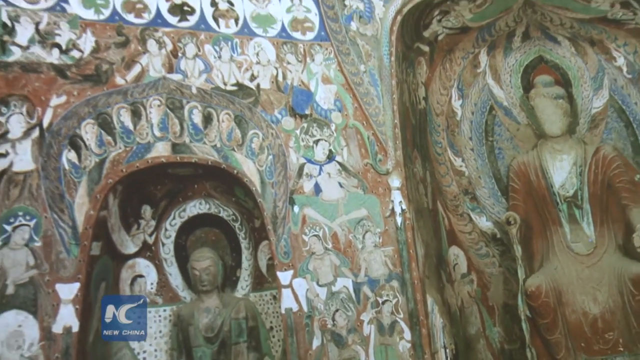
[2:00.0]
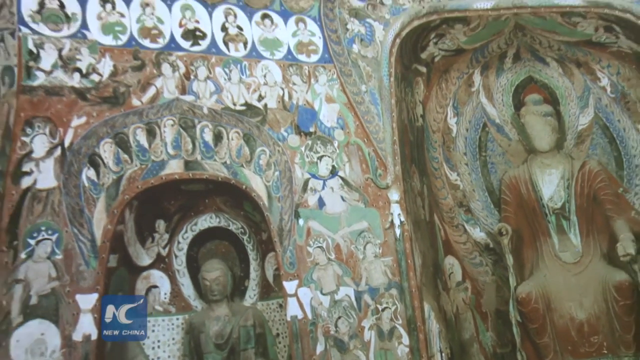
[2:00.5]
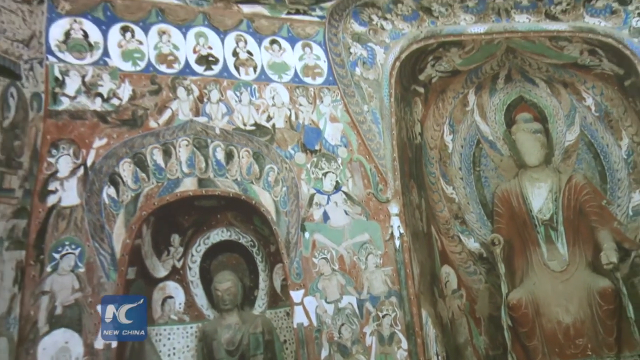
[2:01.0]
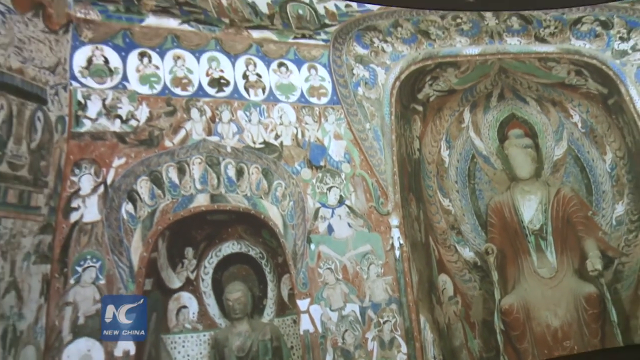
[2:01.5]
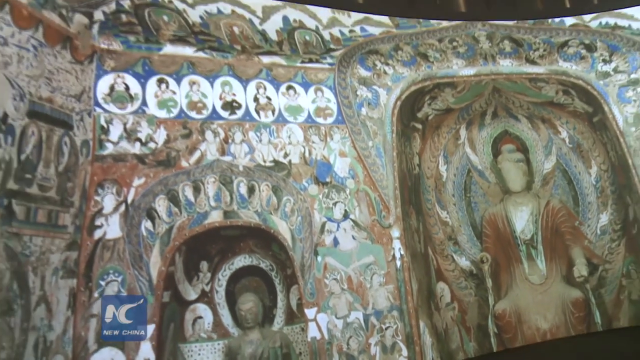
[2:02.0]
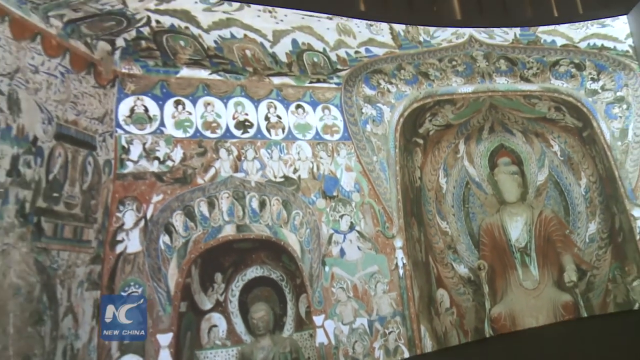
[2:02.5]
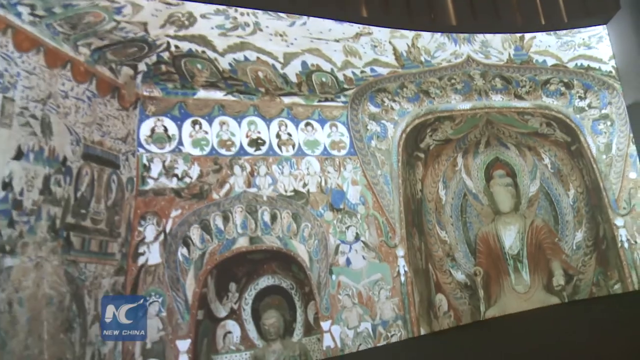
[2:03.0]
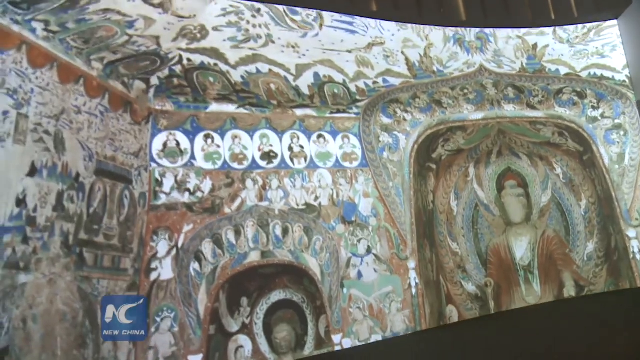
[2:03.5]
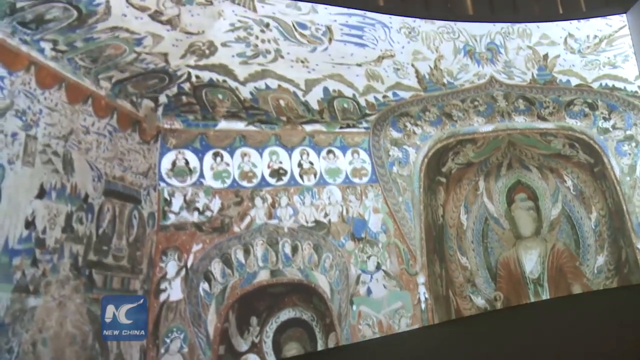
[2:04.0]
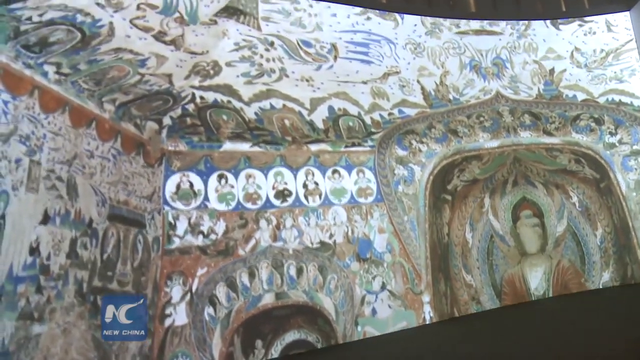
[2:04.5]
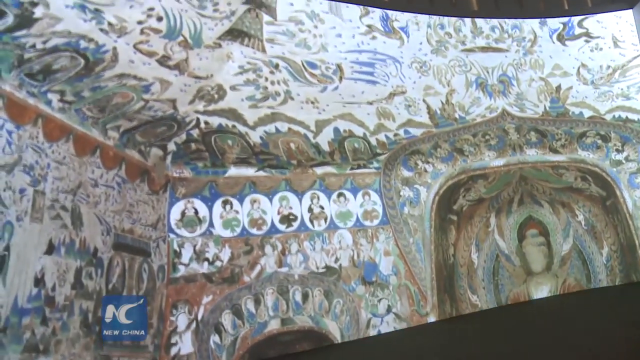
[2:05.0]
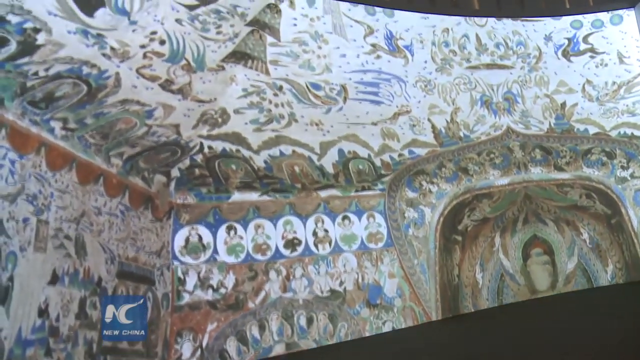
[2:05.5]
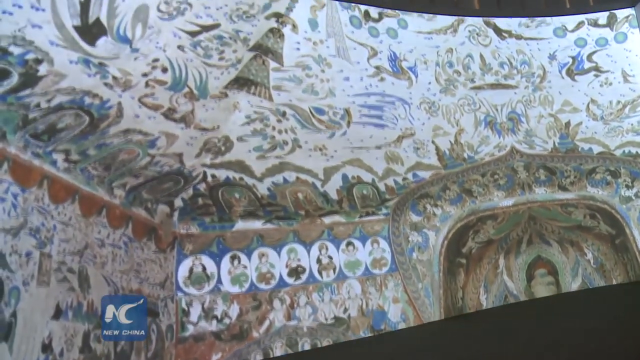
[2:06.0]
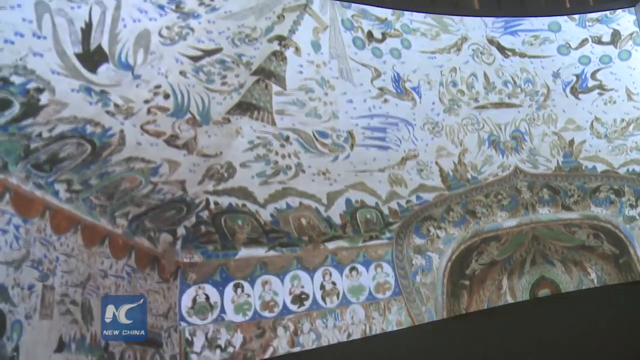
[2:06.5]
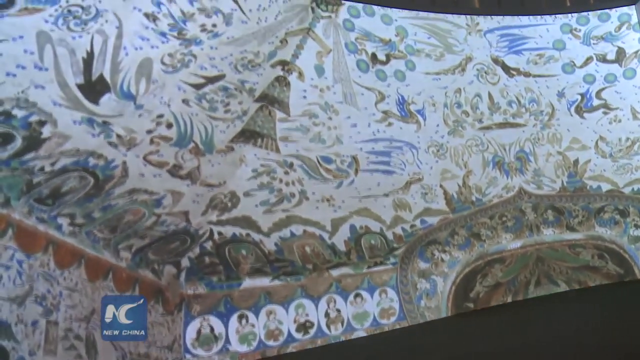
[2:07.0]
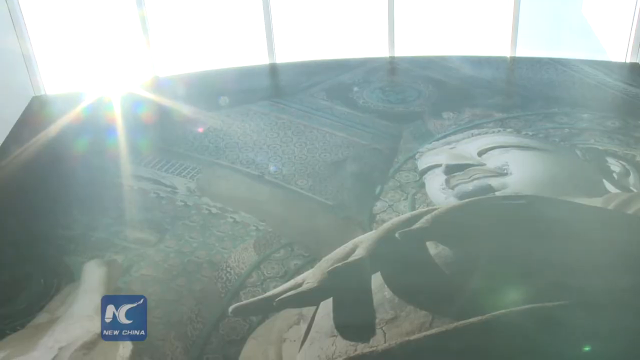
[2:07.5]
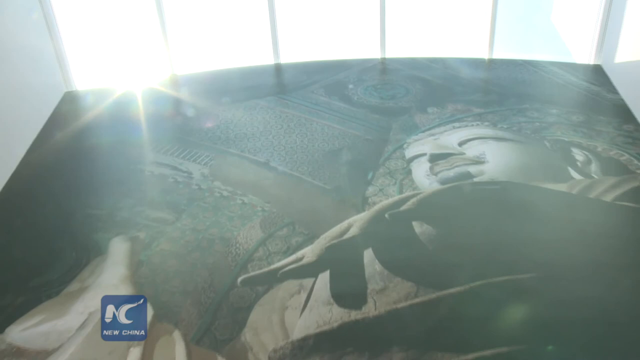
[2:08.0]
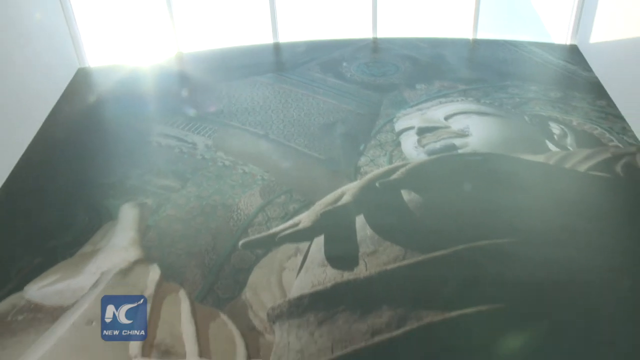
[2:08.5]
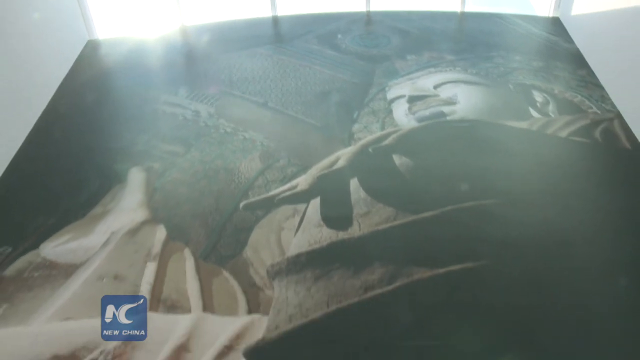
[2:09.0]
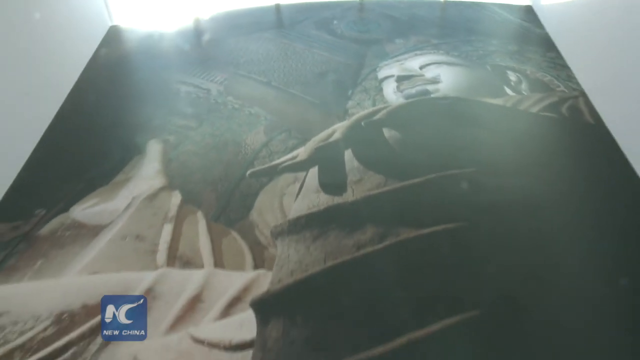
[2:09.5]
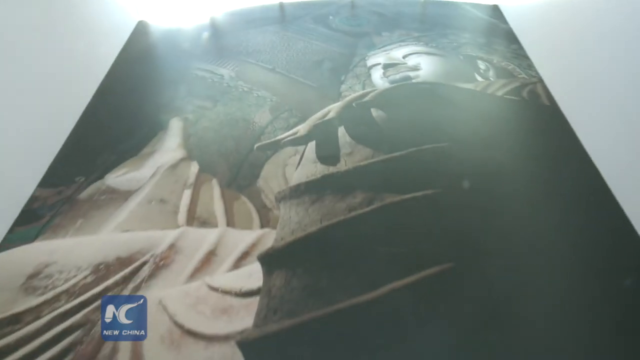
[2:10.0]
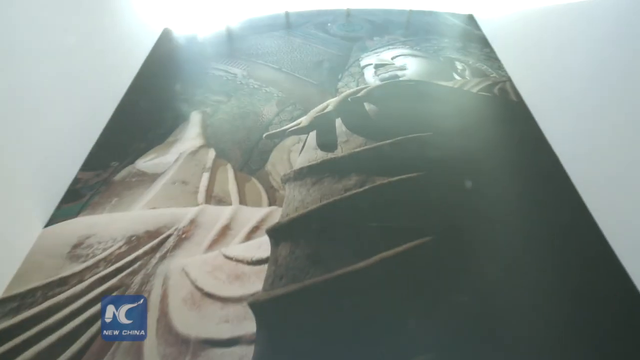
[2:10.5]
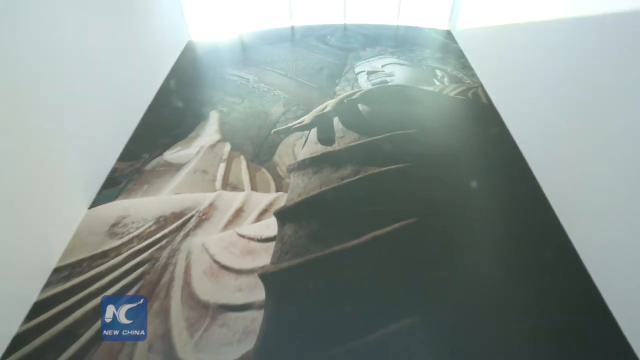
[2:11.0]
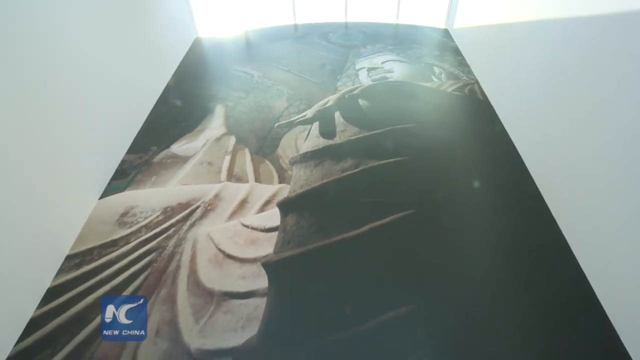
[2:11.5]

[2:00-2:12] More preserved art and sculptures are shown. A shot pans out from a couple of sculptures; it appears to be daytime now, so the lighting is much better. Above one of the sculptures, seven different drawn people appear highlighted against a white background, standing out as something important. The camera then pans out to more art on the ceiling, and the site does look like some type of temple.